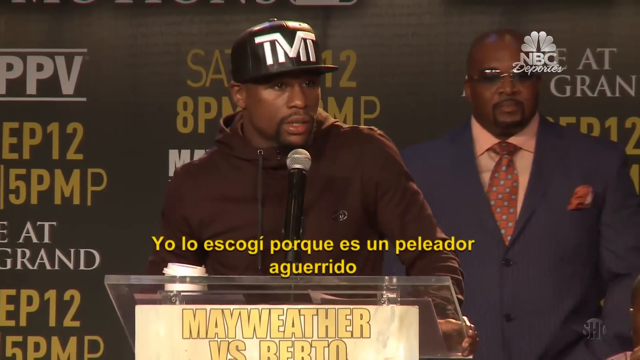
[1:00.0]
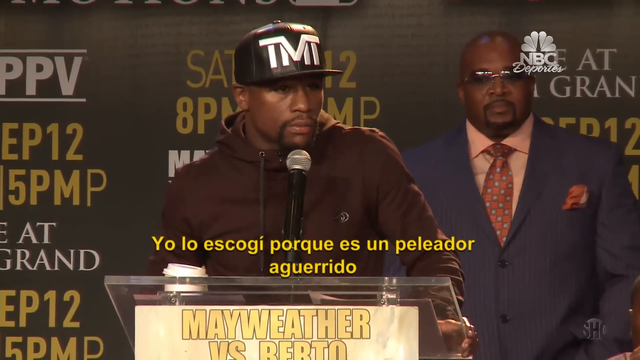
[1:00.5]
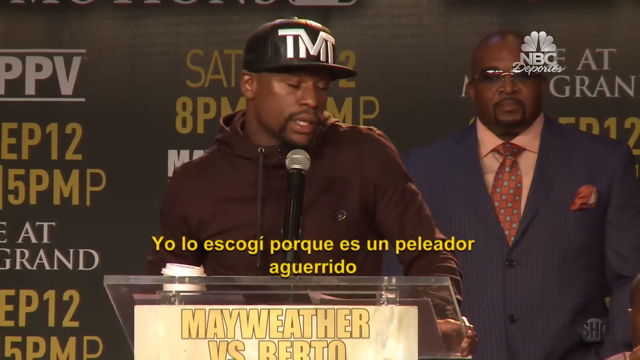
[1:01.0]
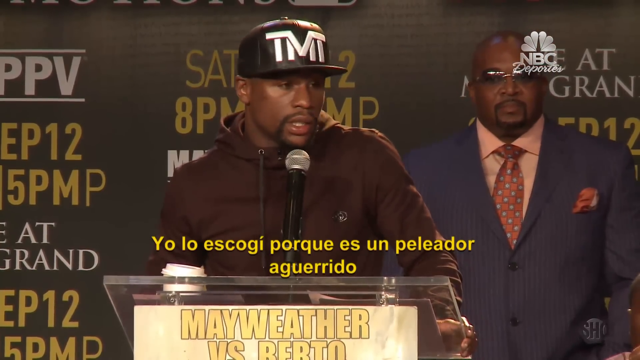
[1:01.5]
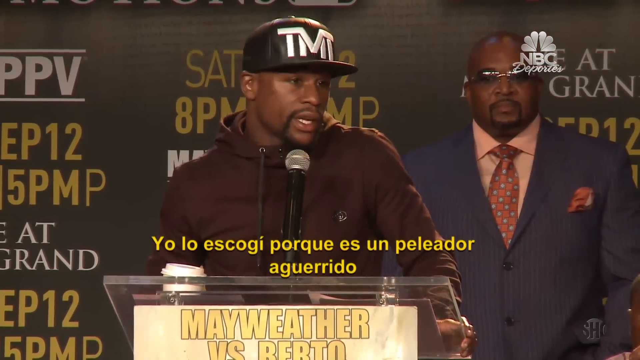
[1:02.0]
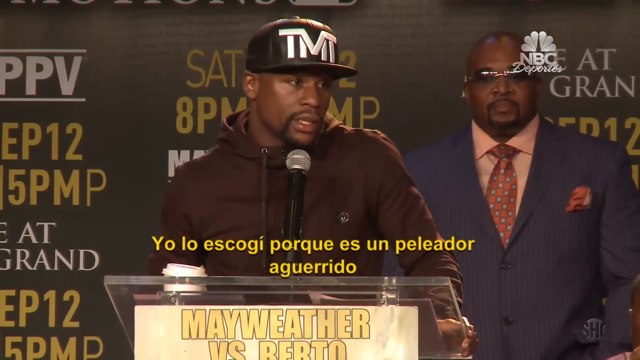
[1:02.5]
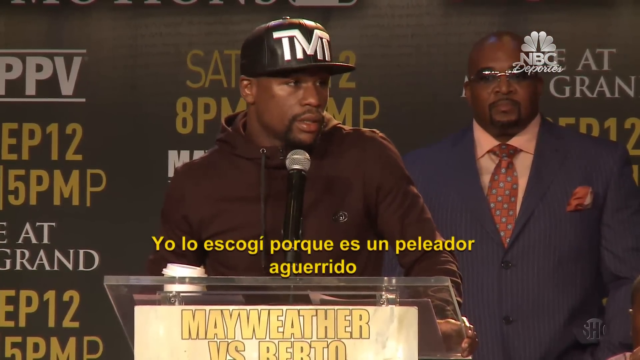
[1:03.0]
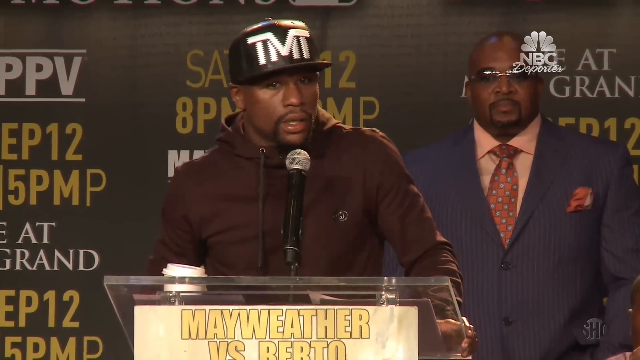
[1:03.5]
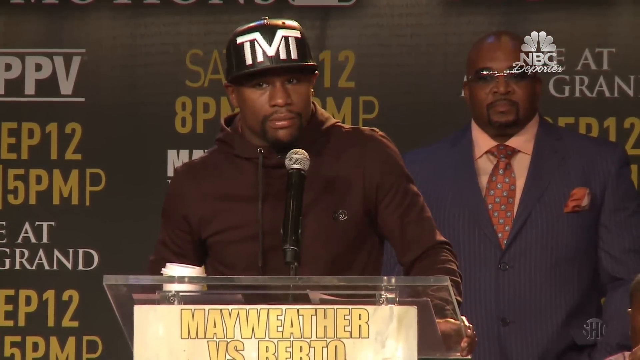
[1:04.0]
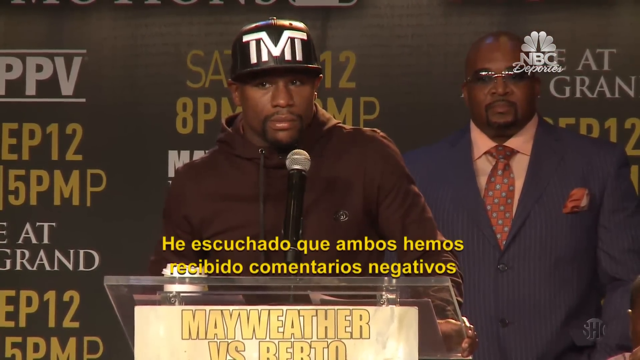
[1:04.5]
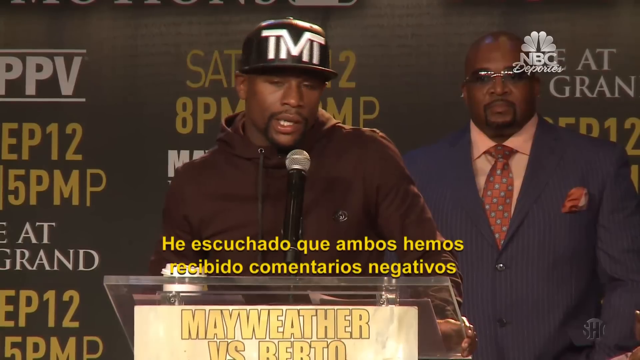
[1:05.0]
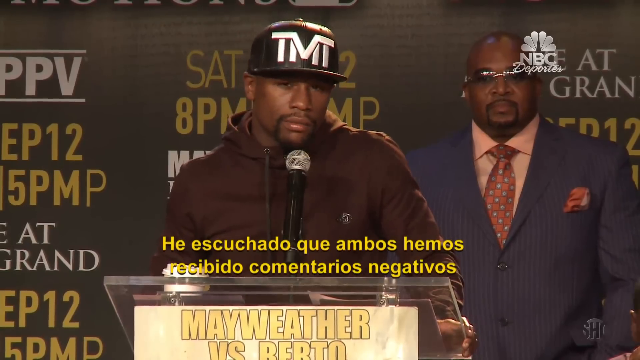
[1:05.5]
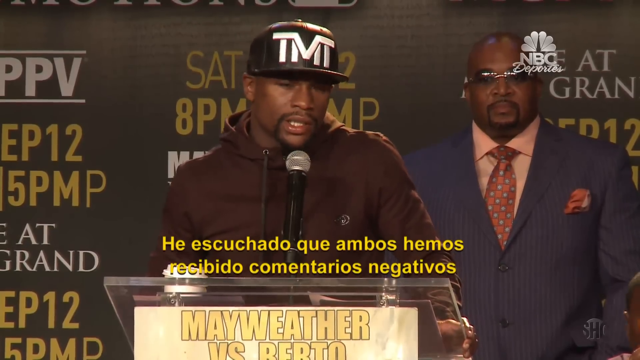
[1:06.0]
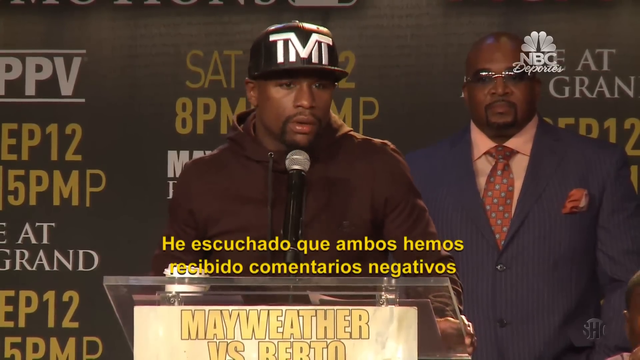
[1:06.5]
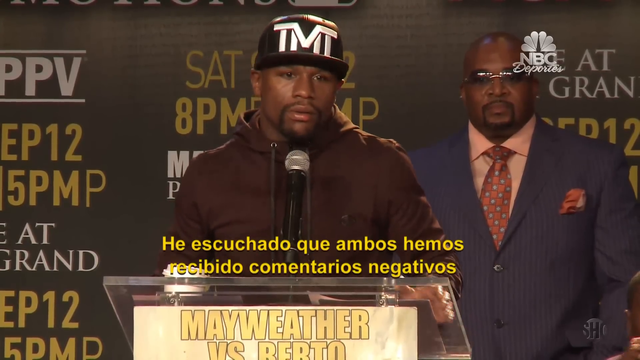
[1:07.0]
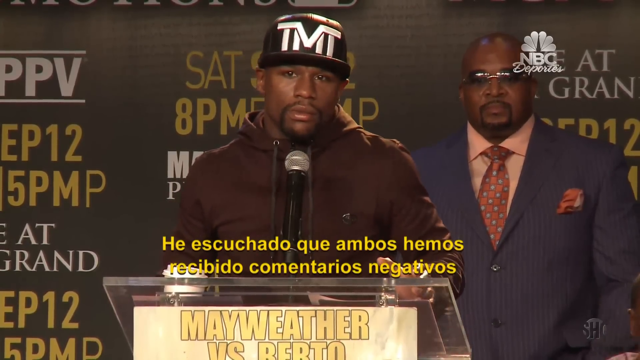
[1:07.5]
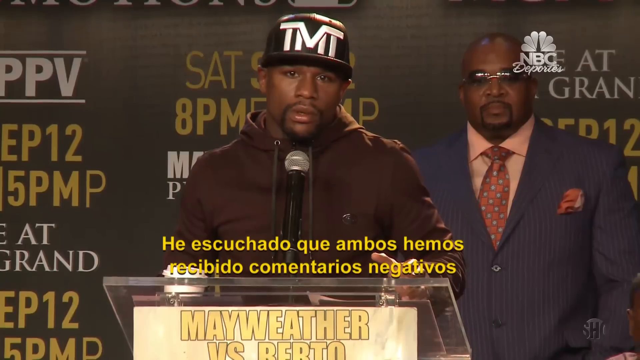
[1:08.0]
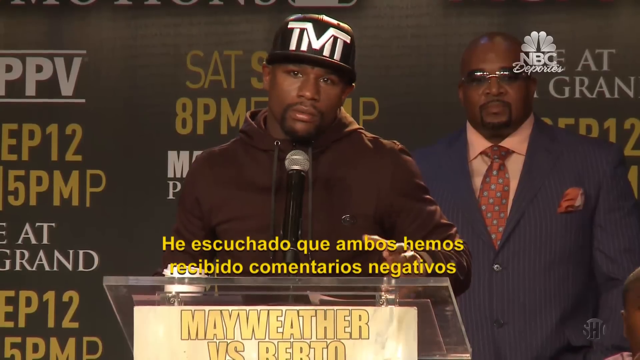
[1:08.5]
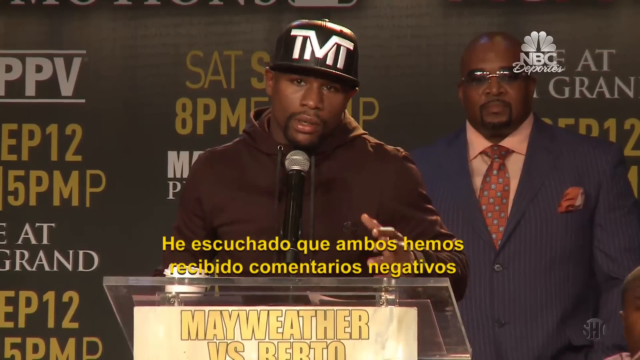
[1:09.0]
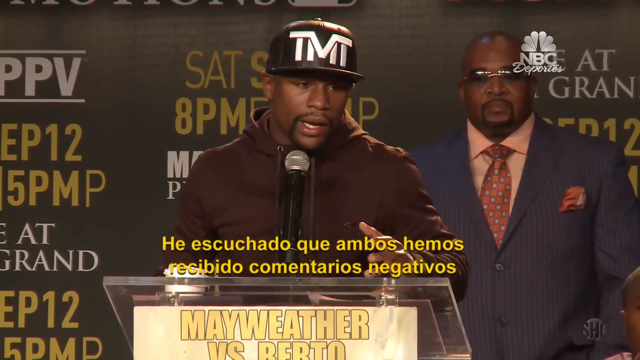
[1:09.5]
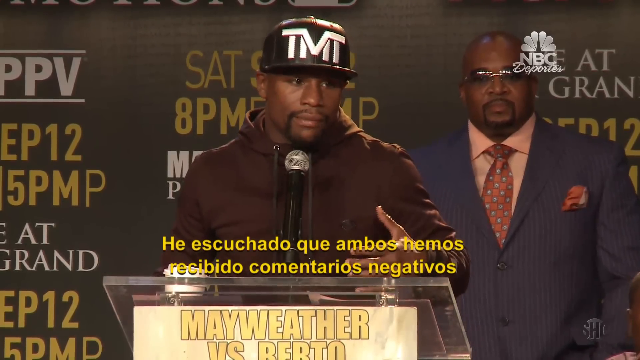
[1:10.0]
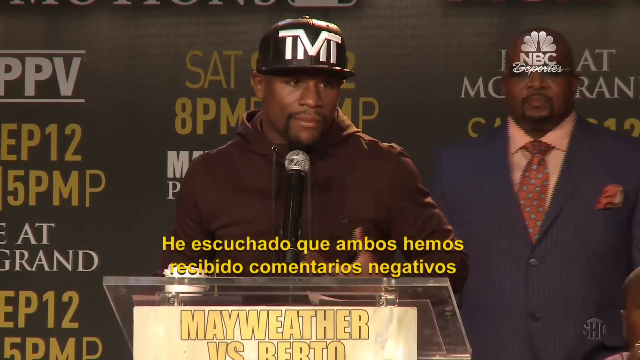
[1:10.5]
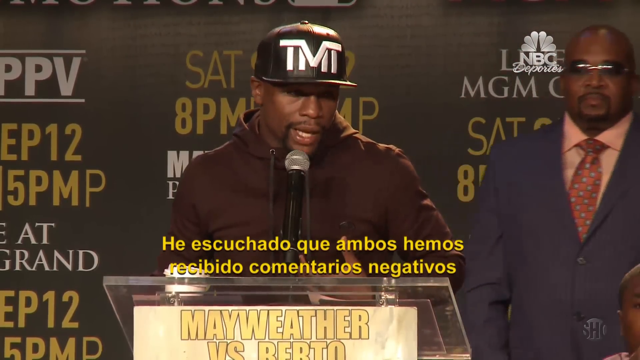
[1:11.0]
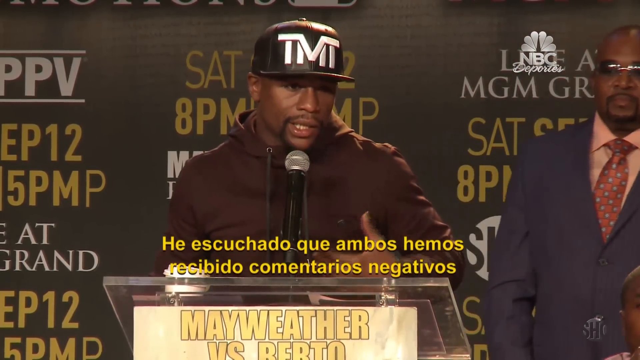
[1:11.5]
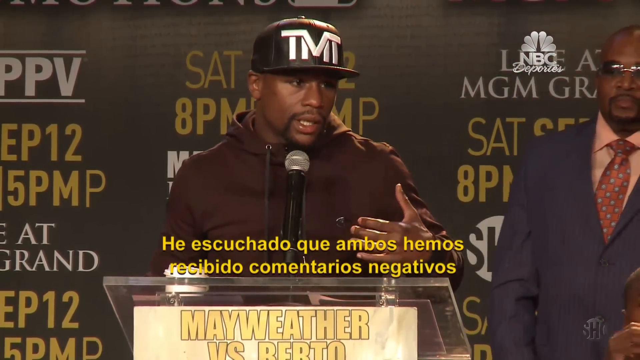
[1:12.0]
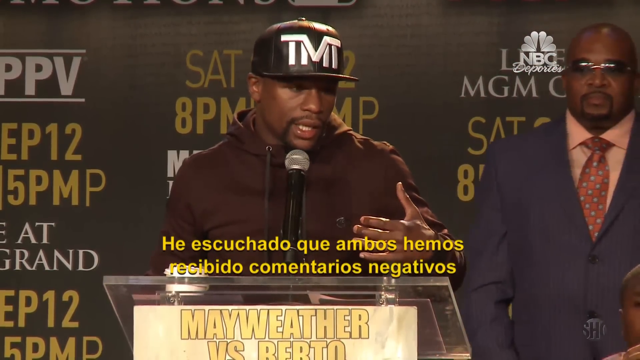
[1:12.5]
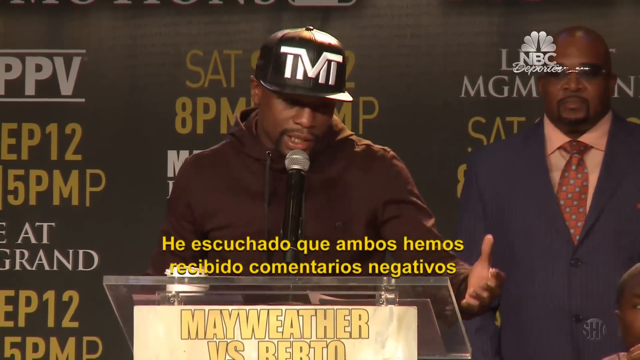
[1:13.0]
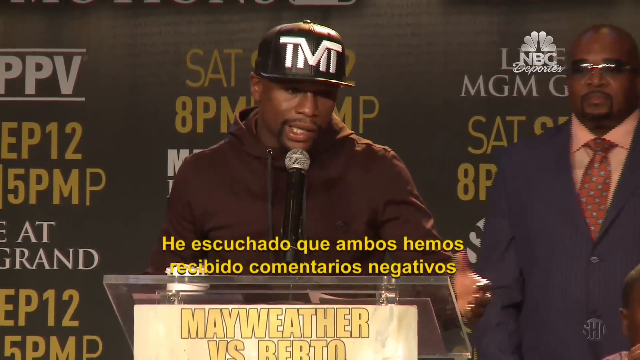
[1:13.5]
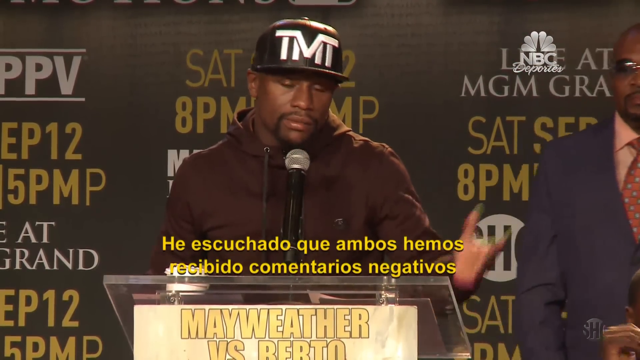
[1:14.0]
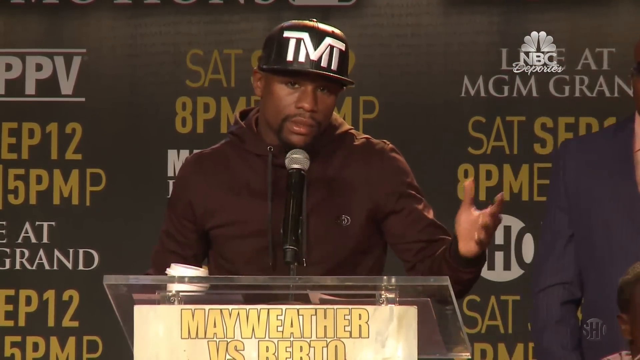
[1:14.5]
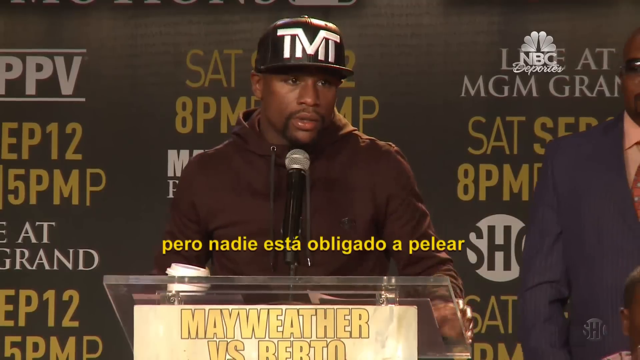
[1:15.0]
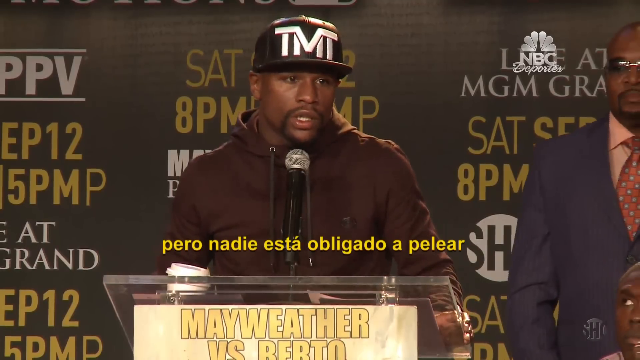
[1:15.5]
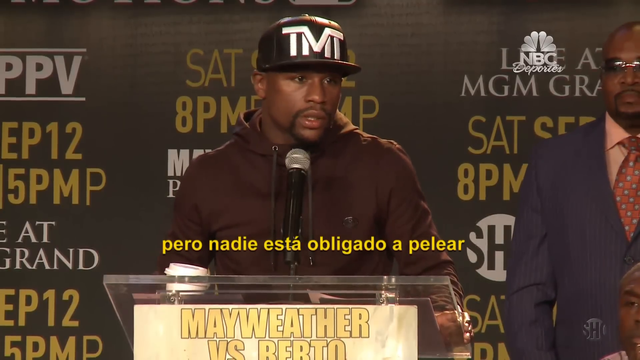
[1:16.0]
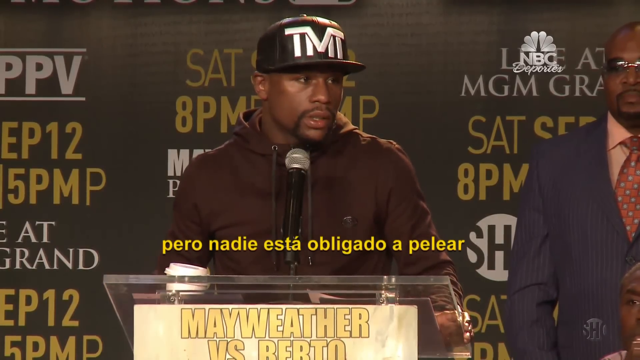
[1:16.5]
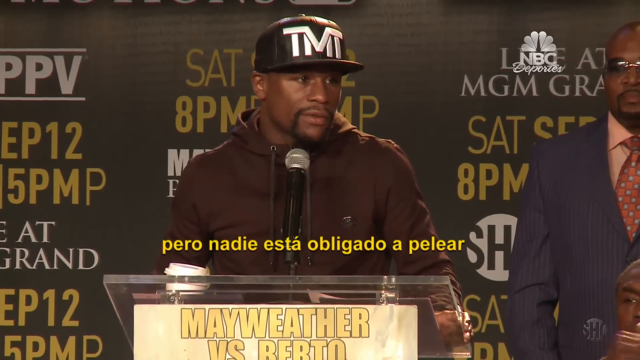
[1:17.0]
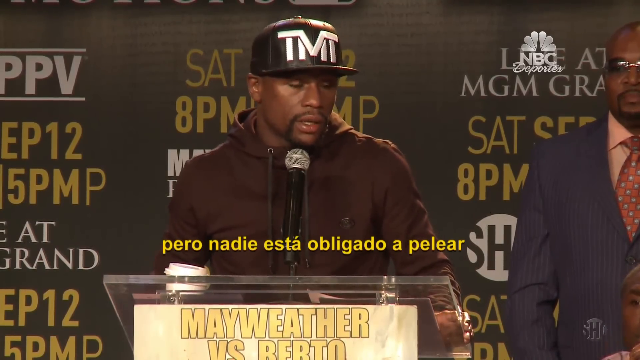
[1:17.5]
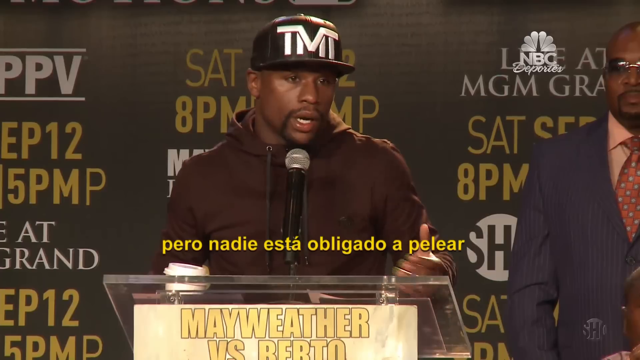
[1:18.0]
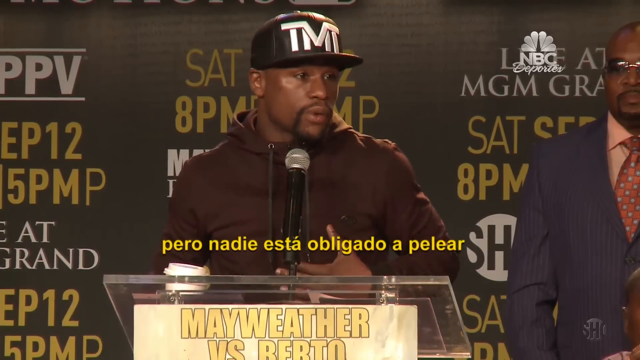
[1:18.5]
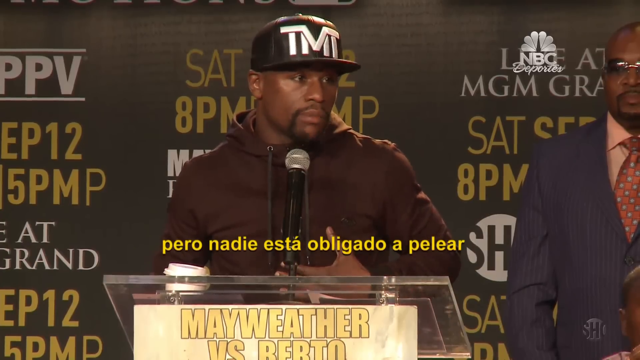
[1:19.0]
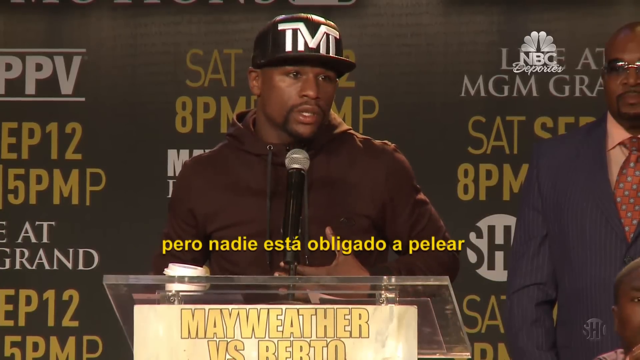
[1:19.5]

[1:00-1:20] A man stands at a podium. His head moves to the right, then back to the left. He gestures with his left hand, bent at the elbow, bringing it to his chest with the thumb pointing out, then moving it outward a little to his side before dropping it down. A translation into Spanish appears underneath him. He appears to be recorded from his left side. A man behind him wears a blue suit, a pink shirt, a red polka dot tie, and glasses.